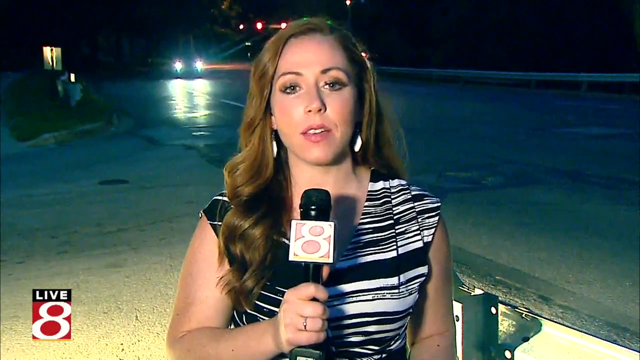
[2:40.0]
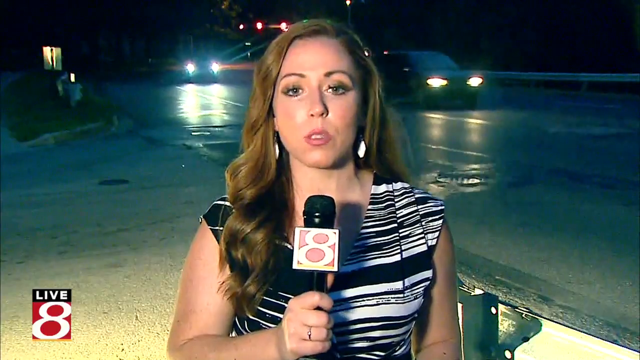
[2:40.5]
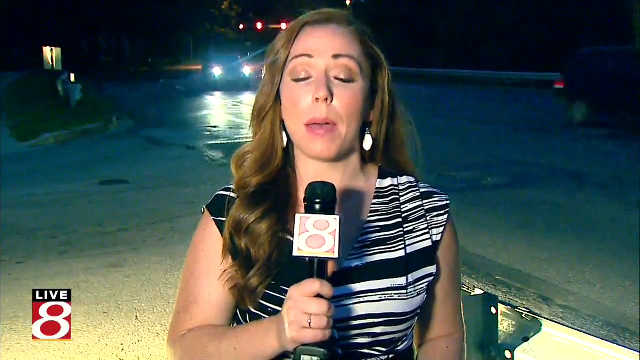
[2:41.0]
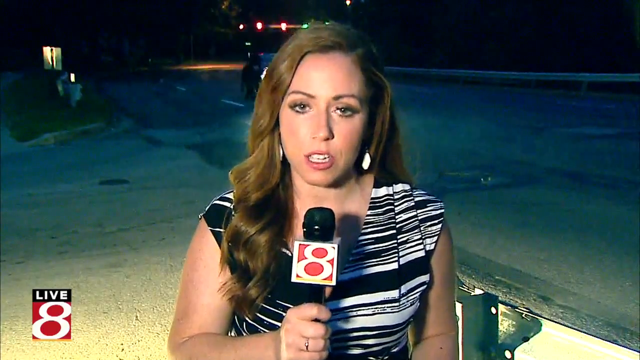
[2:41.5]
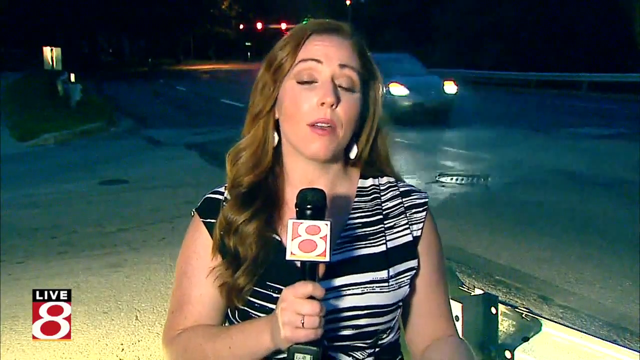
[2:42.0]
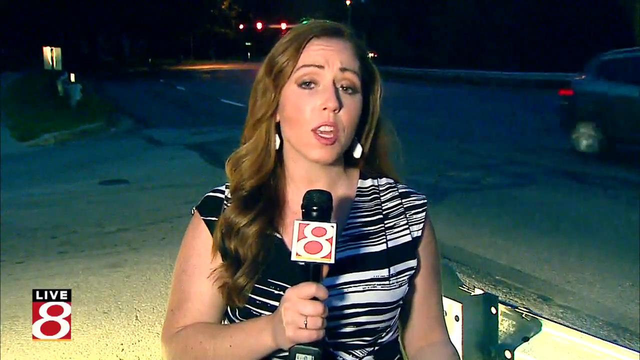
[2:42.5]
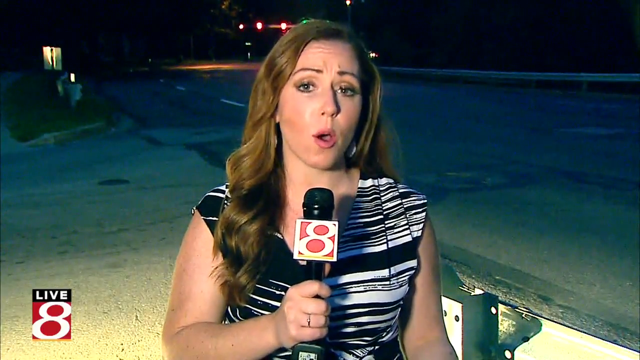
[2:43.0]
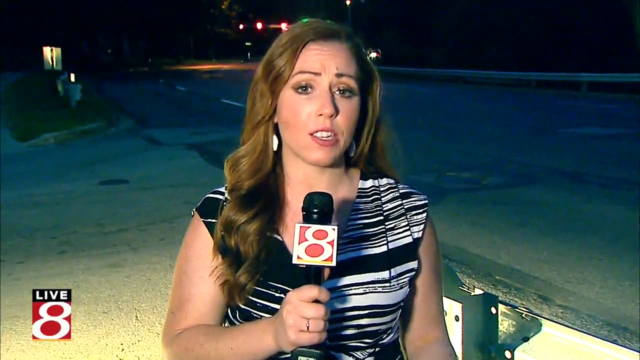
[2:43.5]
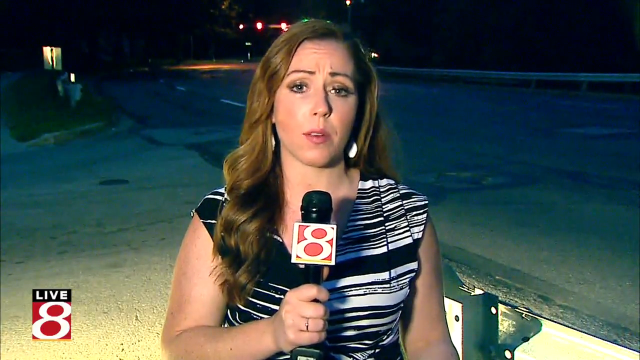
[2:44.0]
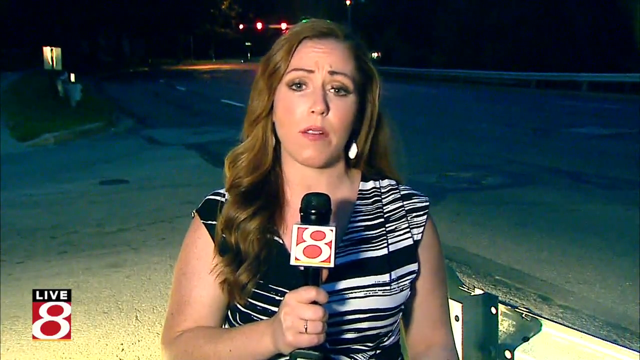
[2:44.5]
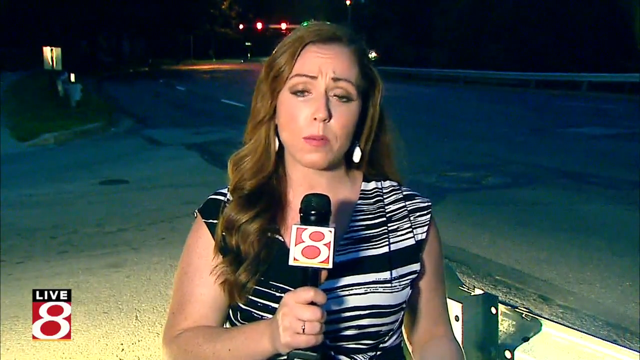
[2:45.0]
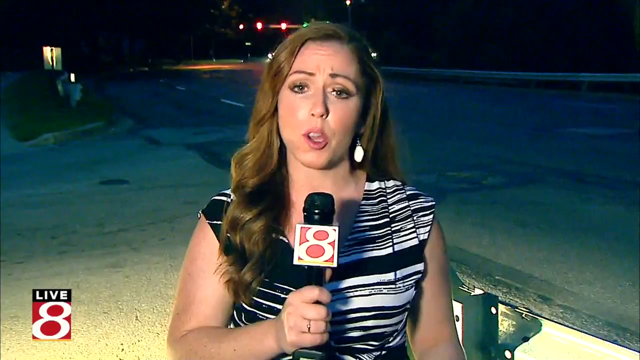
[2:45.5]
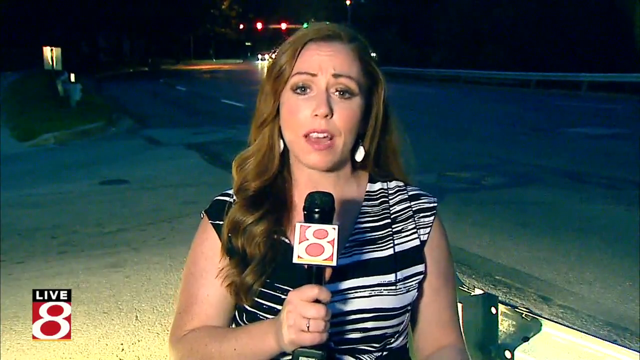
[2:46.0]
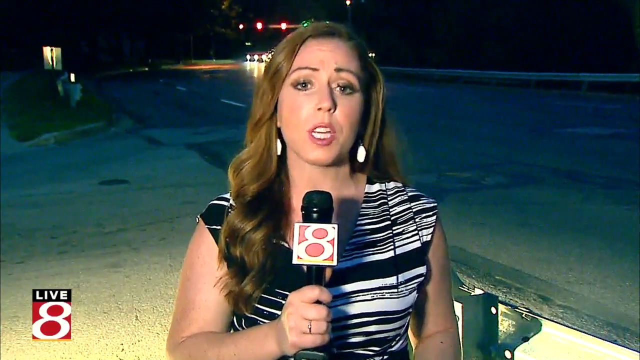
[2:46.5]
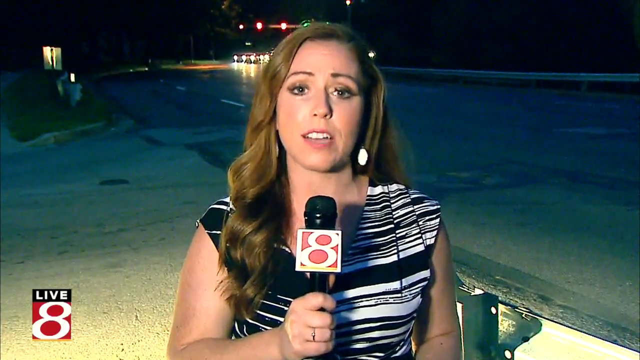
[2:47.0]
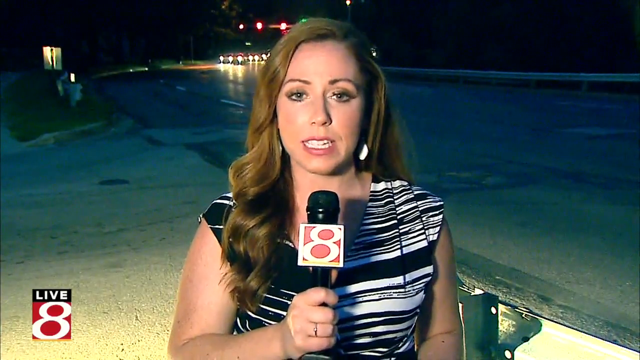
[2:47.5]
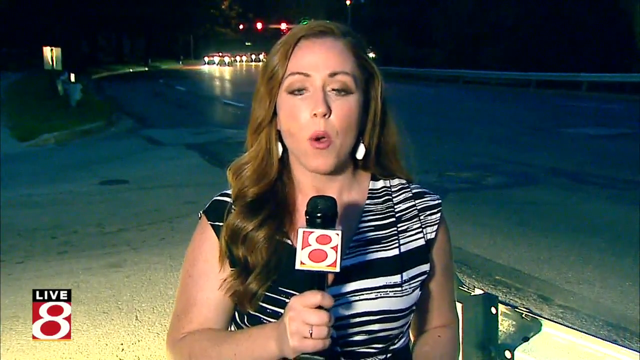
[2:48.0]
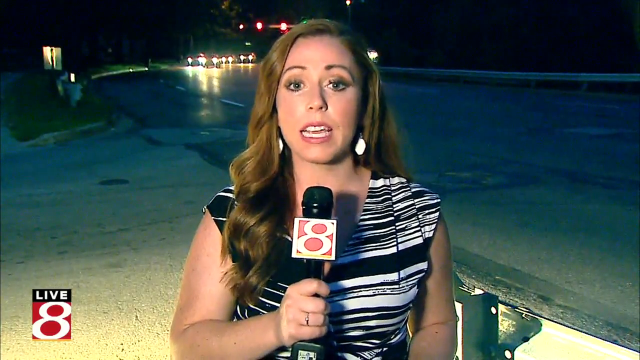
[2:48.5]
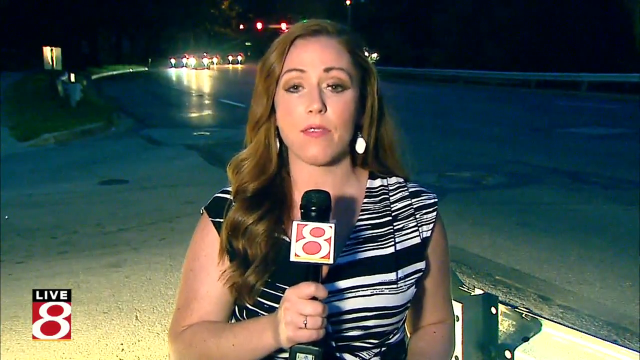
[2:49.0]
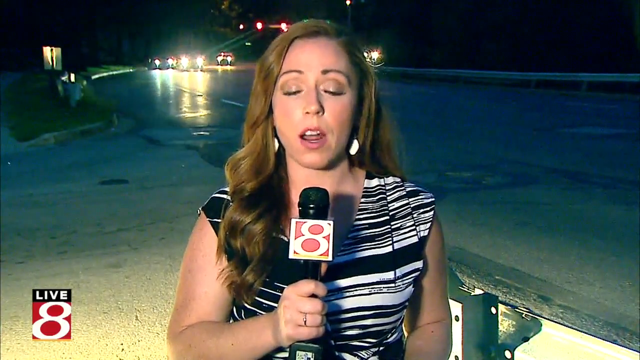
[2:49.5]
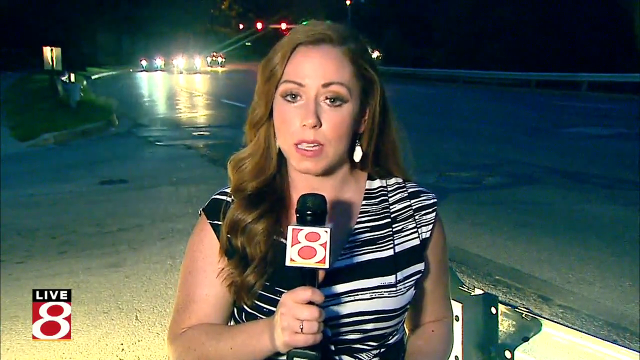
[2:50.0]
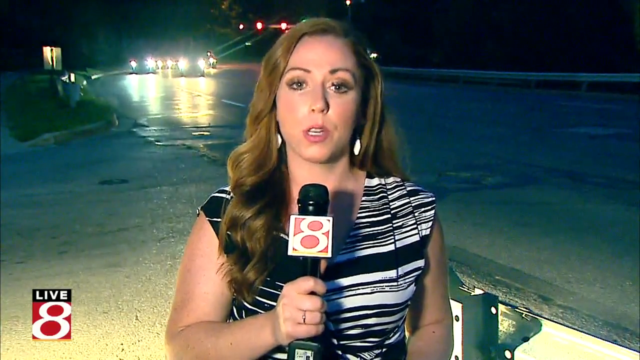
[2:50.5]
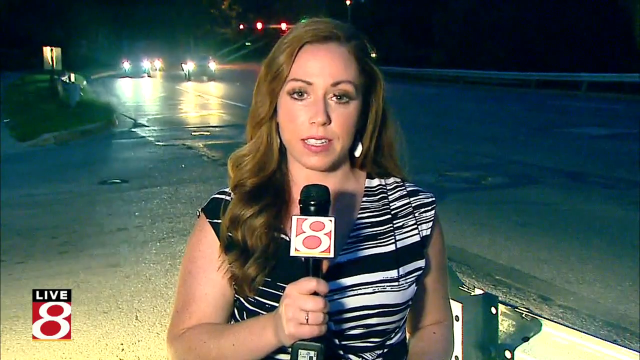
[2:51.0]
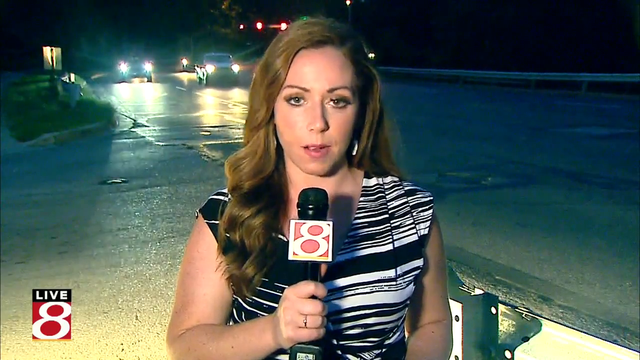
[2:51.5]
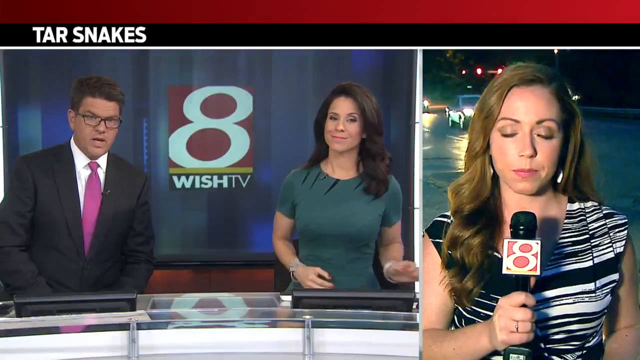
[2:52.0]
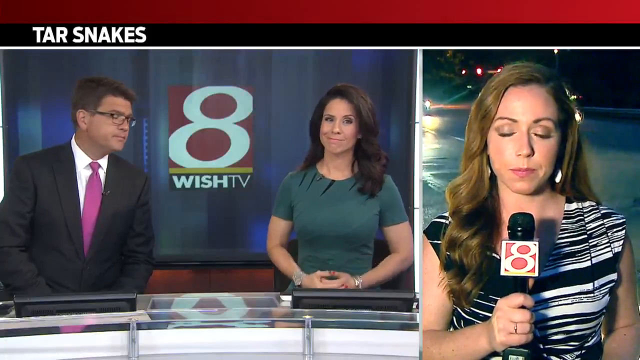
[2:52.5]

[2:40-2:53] Live on location with WISH-TV Channel 8 in Indiana, a brunette woman in her late 20s in a black and white dress speaks while standing in front of a street at night as cars come by, ending her report. The video then returns to the WISH-TV Channel 8 newsroom, where a man in his mid-40s with black hair, glasses, a black suit and a pink tie is shown, and to his right a woman in her mid-40s with dark hair in a green dress.